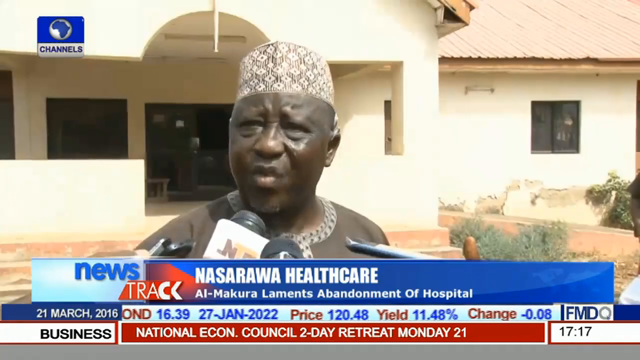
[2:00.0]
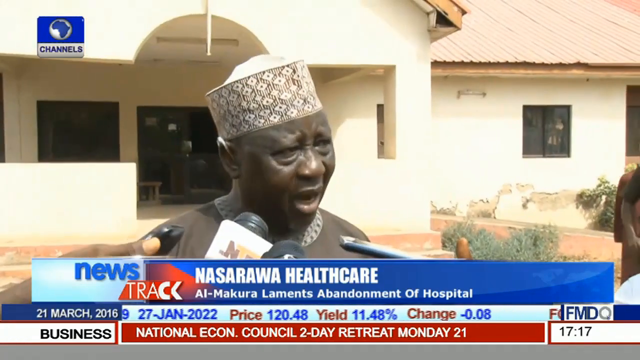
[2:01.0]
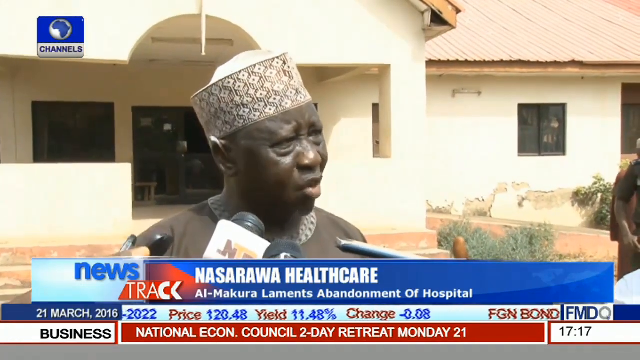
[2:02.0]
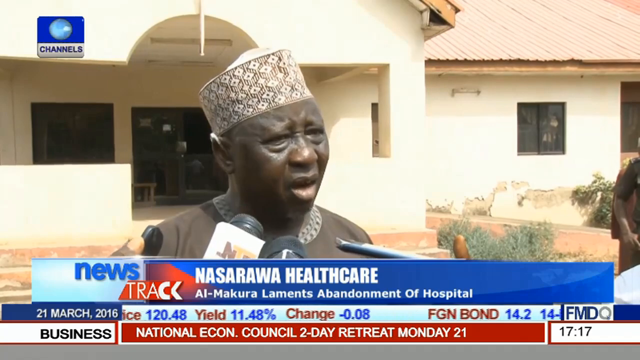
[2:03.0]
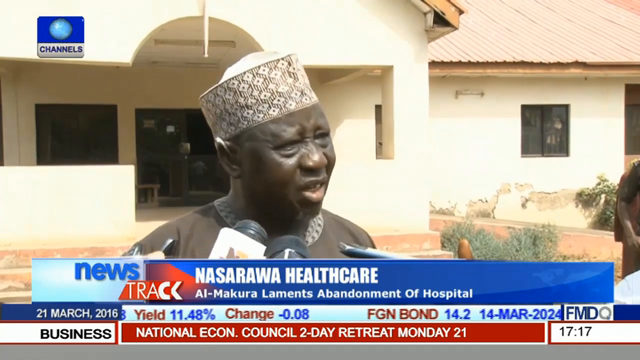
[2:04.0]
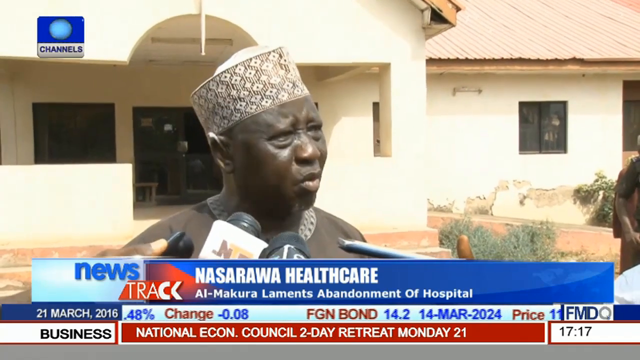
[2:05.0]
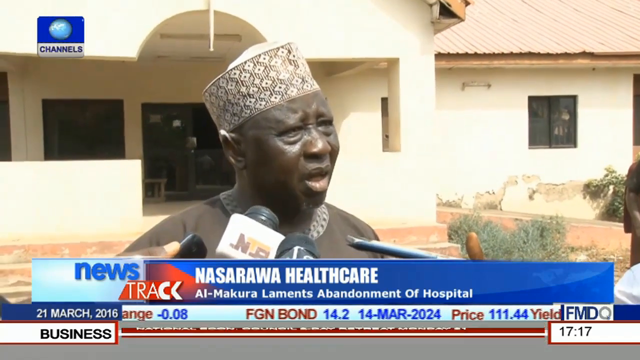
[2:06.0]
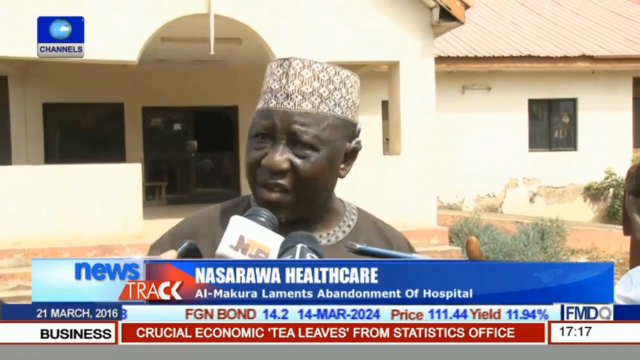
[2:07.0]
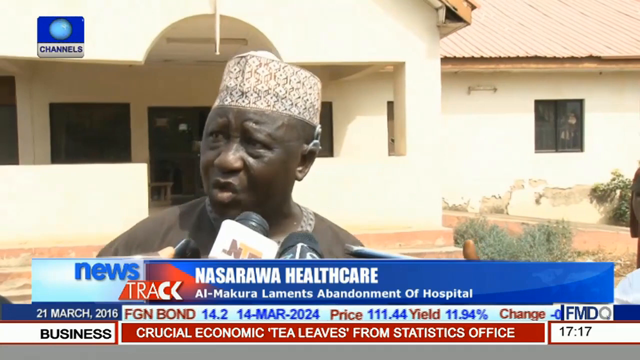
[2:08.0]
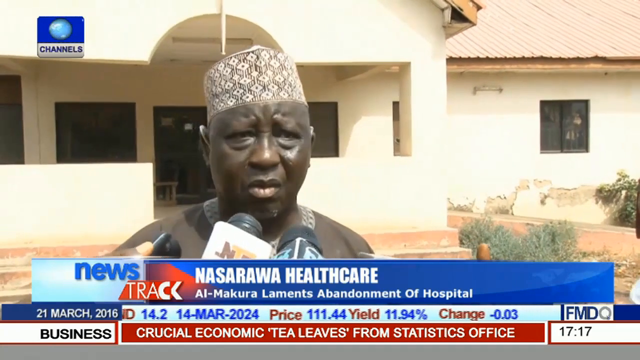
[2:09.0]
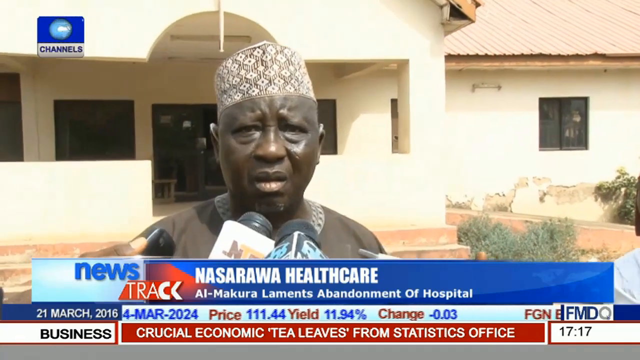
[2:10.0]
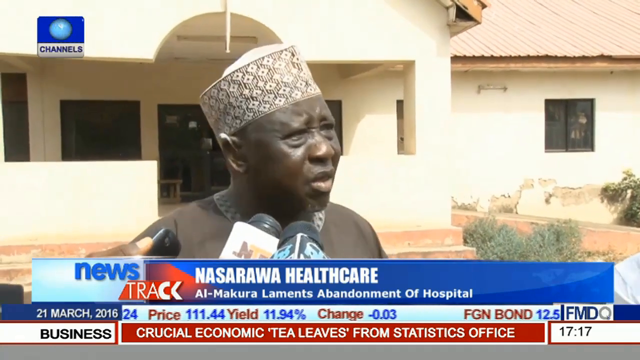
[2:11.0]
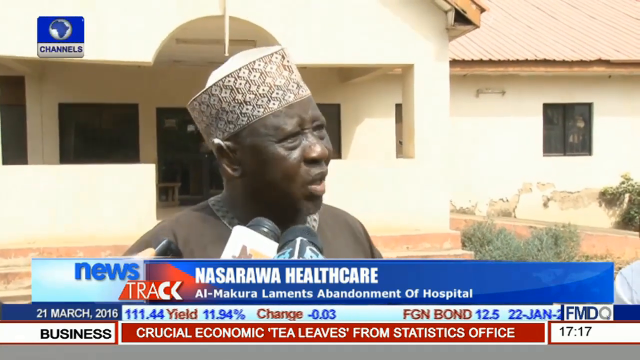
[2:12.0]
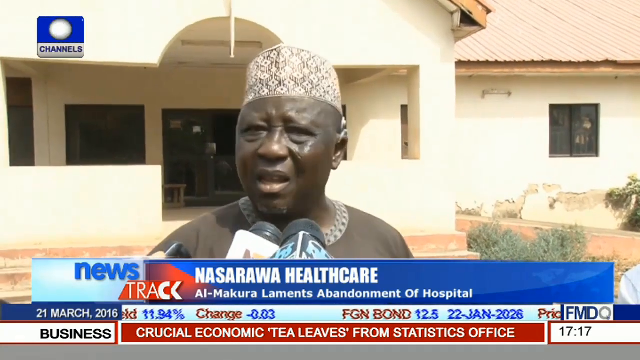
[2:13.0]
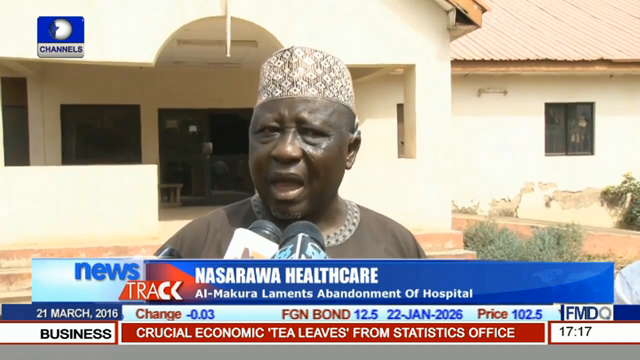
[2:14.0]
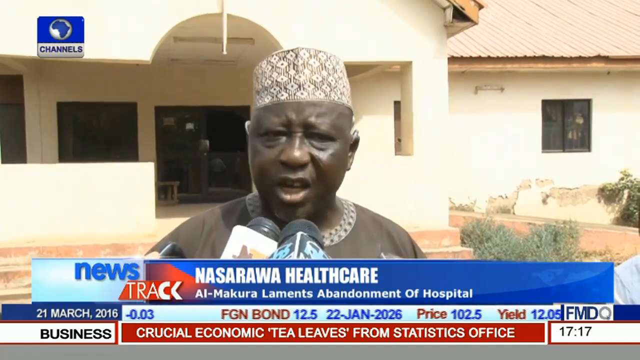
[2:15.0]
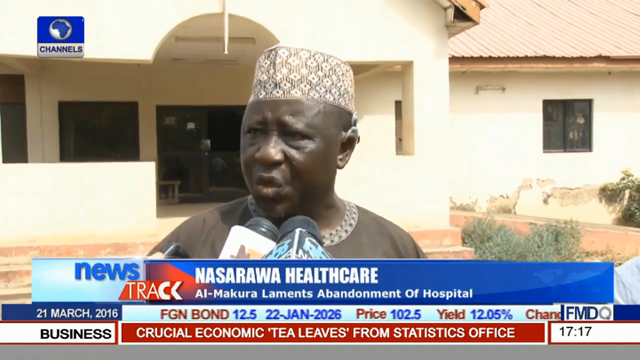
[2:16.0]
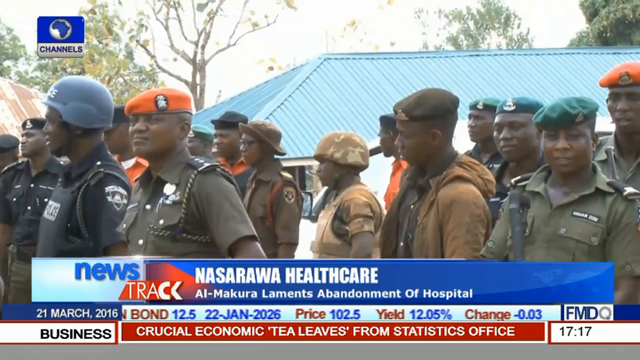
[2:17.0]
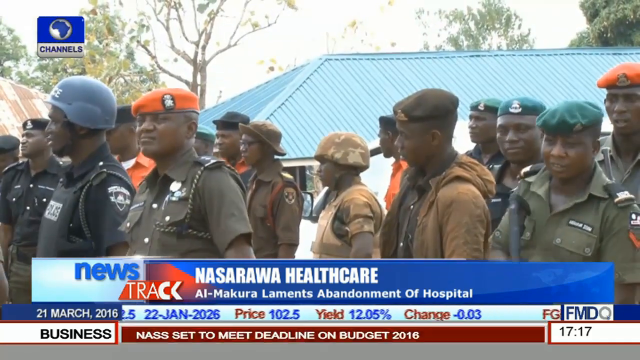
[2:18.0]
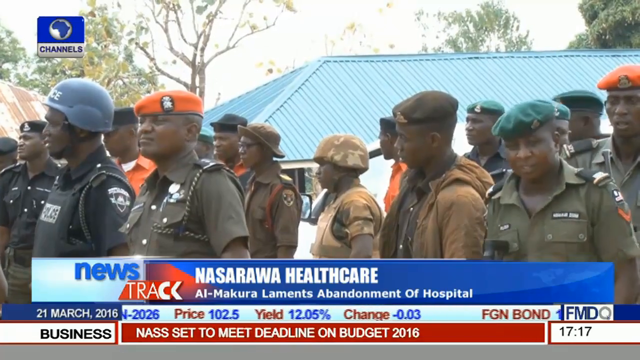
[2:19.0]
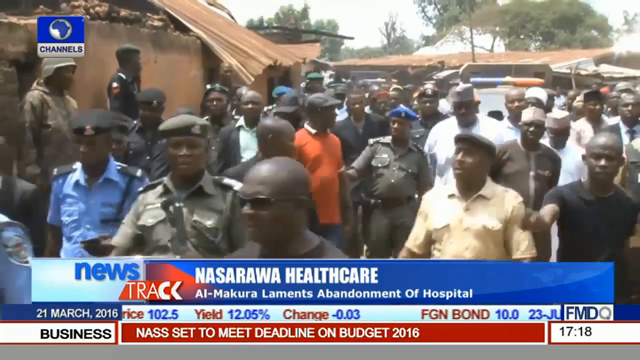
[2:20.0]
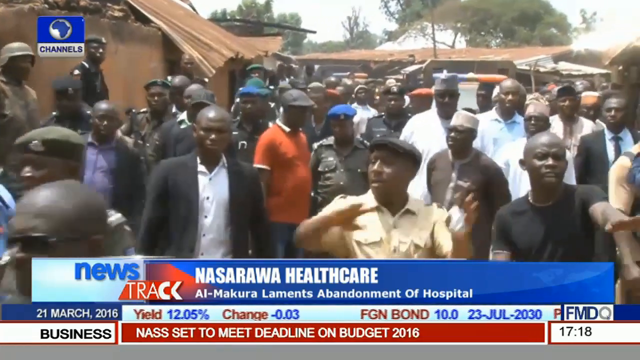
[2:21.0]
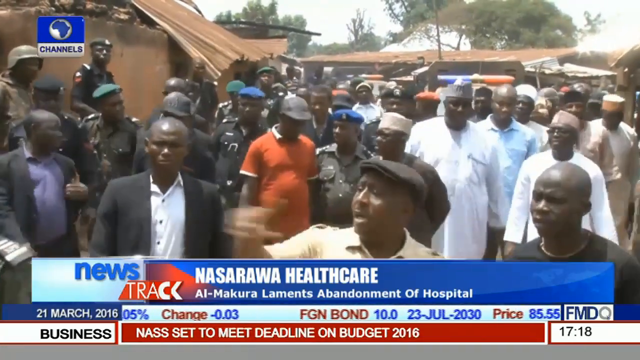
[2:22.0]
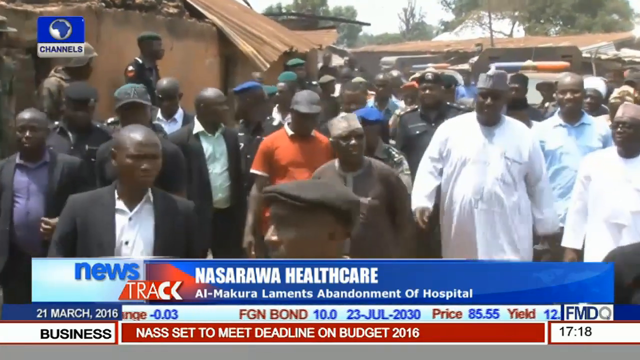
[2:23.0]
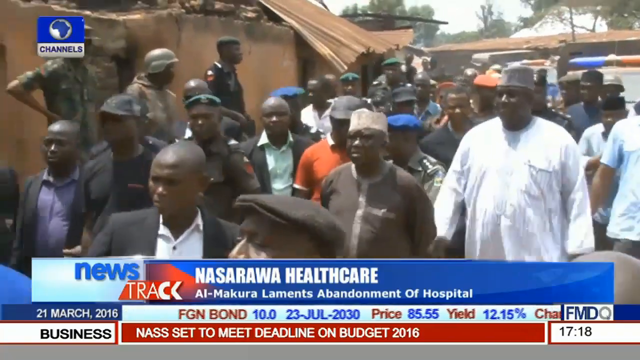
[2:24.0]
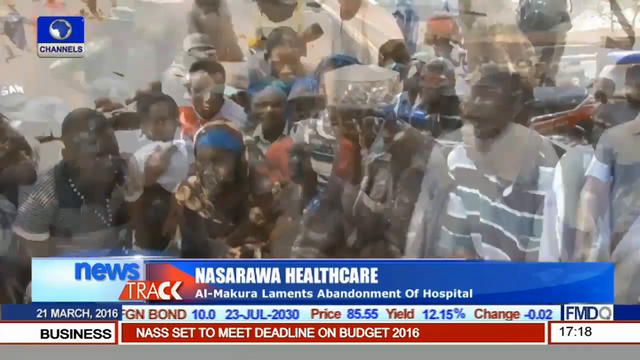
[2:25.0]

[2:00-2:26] A man with a hat on his head is in front of a building with many microphones held up to him. He talks, kind of turning his head as he appears to be looking at different reporters. On-screen text refers to health care and the abandonment of a hospital. He continues to turn his head, kind of looking in different directions, speaking passionately. Then what looks like some sort of organized group appears, all standing together, wearing different hats, with a lot of berets and colors that make it look like they are possibly in some sort of soldier uniforms. A large group in all kinds of different clothes walks together, as does the man who was speaking.